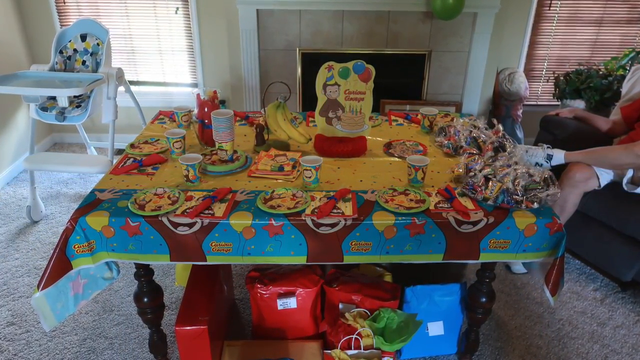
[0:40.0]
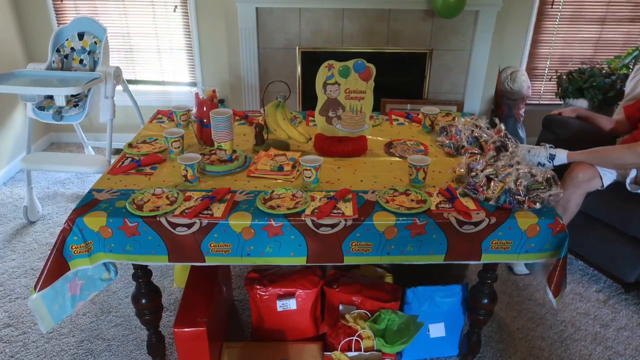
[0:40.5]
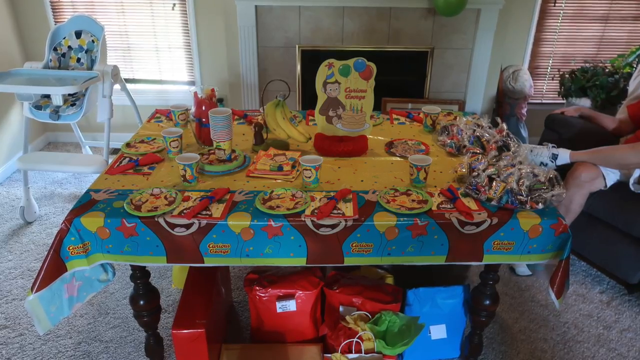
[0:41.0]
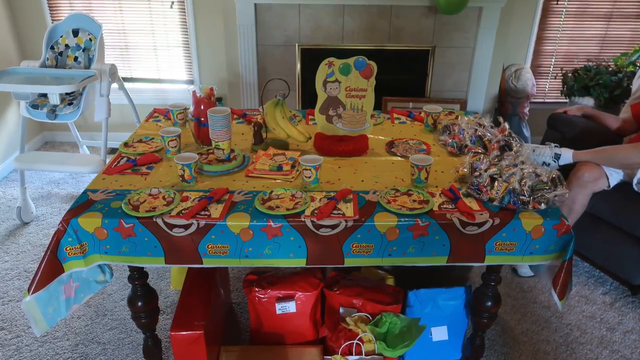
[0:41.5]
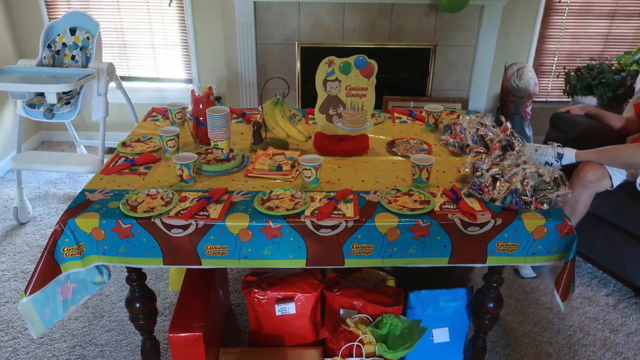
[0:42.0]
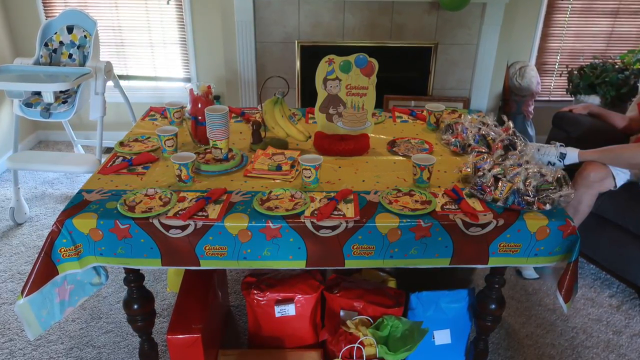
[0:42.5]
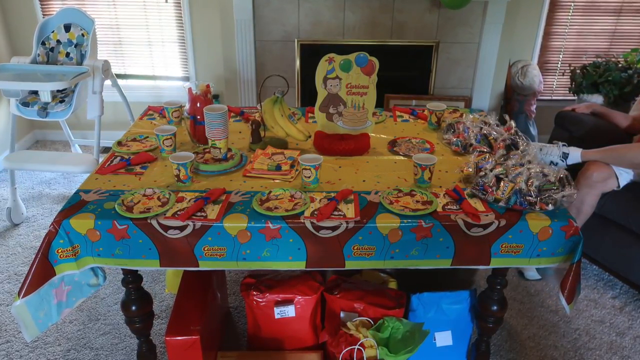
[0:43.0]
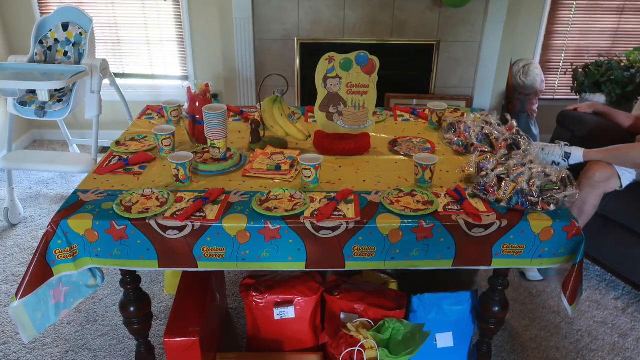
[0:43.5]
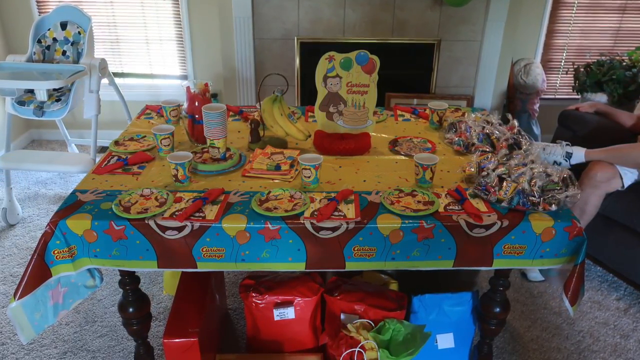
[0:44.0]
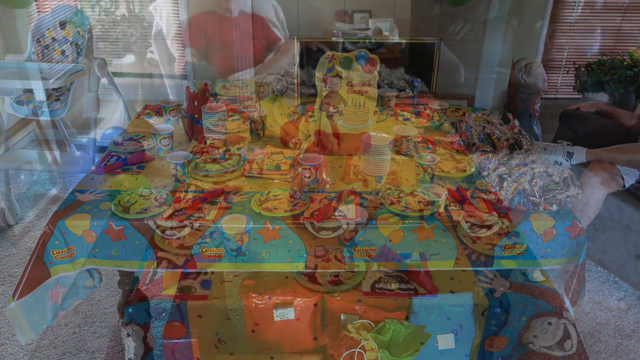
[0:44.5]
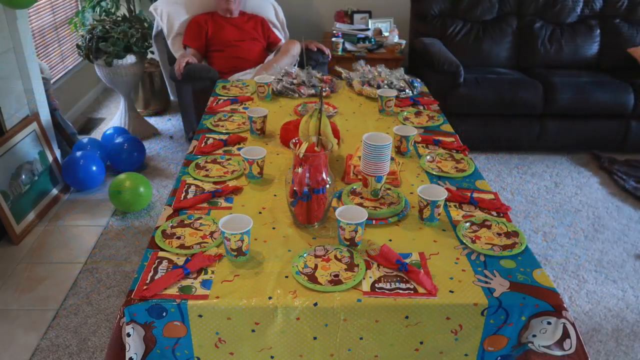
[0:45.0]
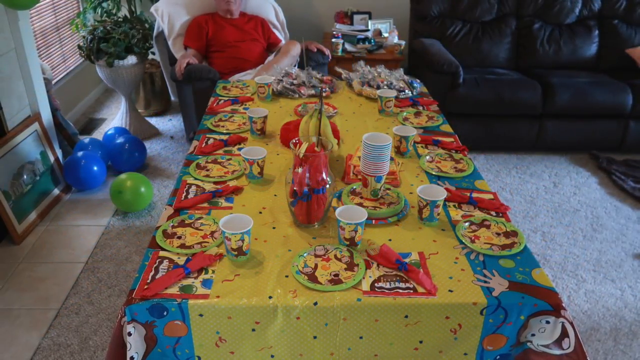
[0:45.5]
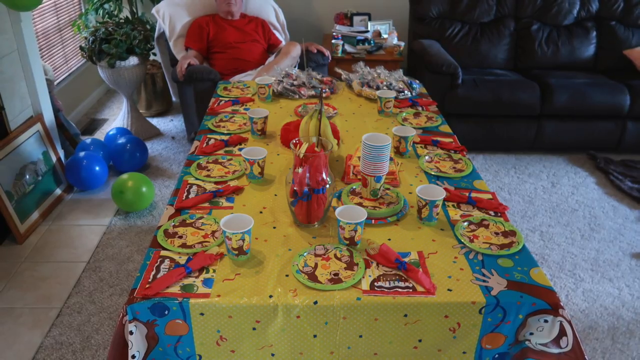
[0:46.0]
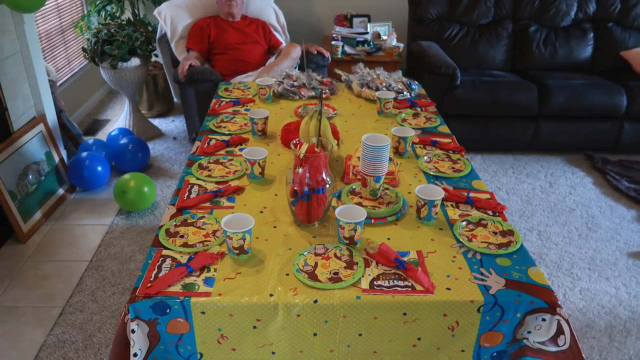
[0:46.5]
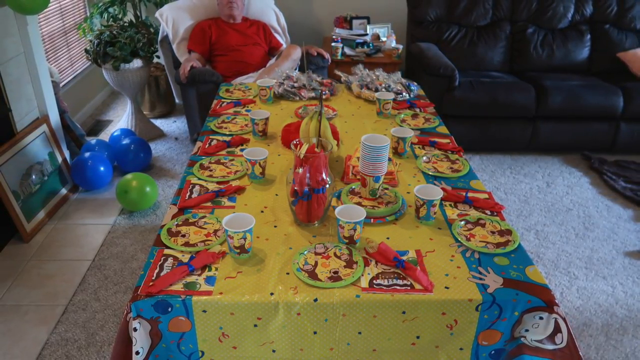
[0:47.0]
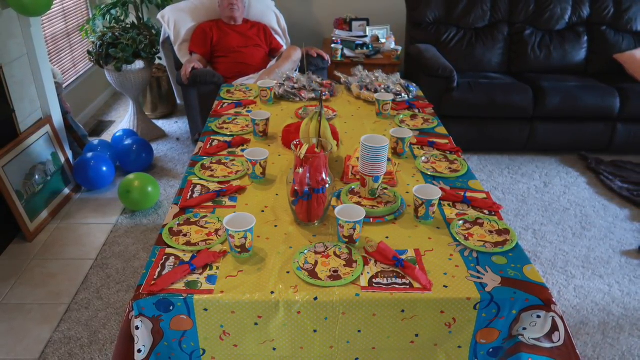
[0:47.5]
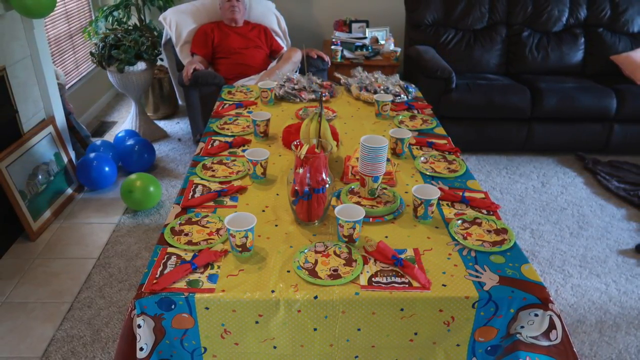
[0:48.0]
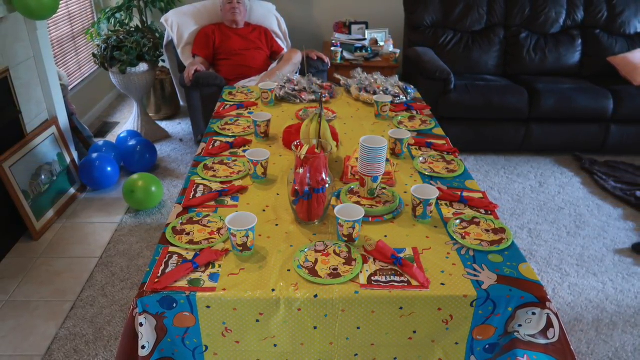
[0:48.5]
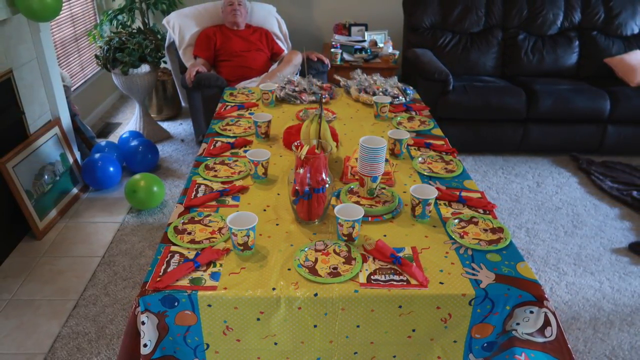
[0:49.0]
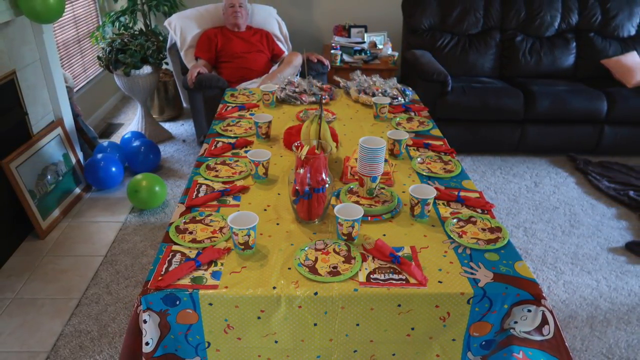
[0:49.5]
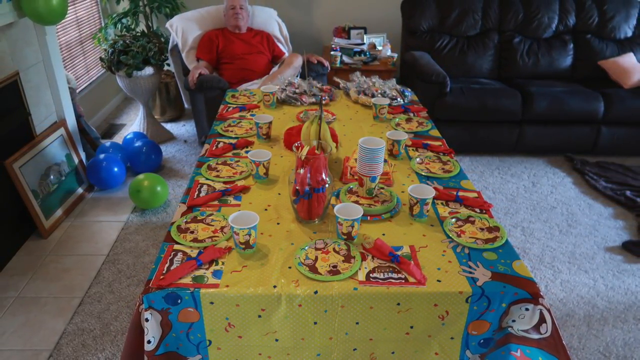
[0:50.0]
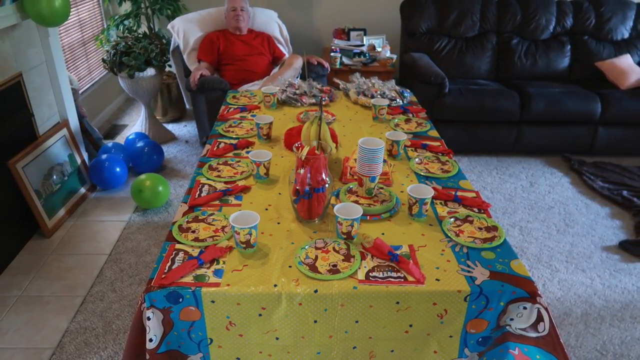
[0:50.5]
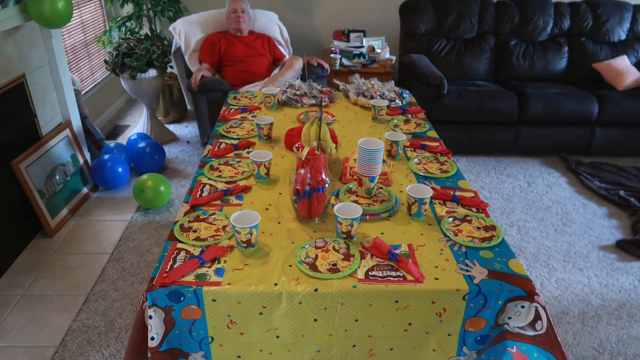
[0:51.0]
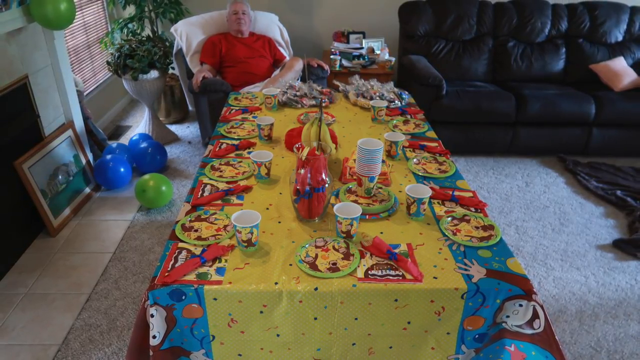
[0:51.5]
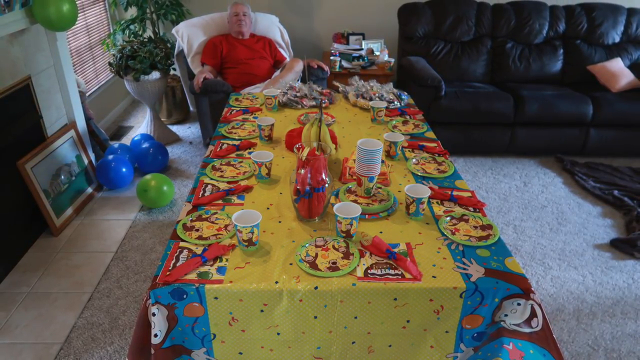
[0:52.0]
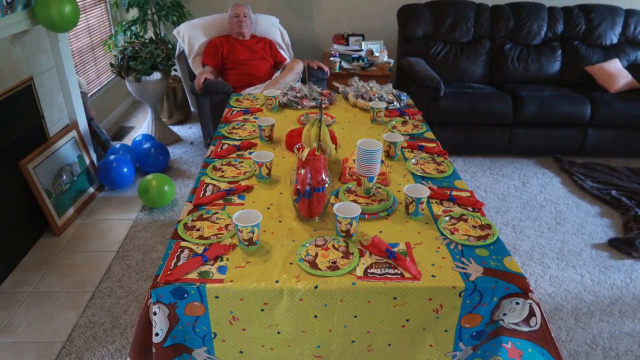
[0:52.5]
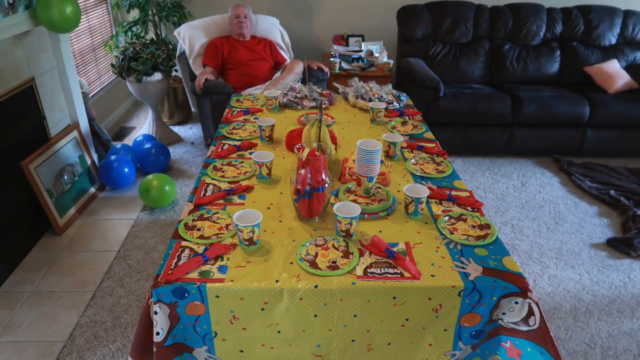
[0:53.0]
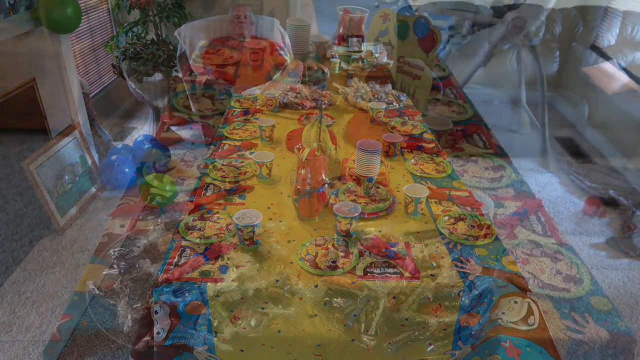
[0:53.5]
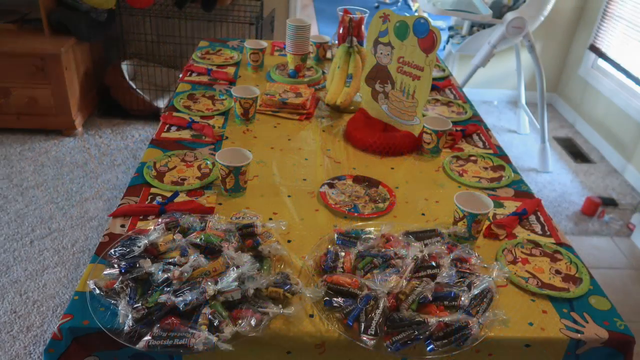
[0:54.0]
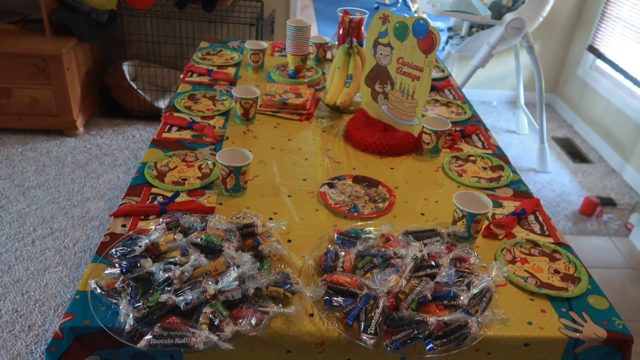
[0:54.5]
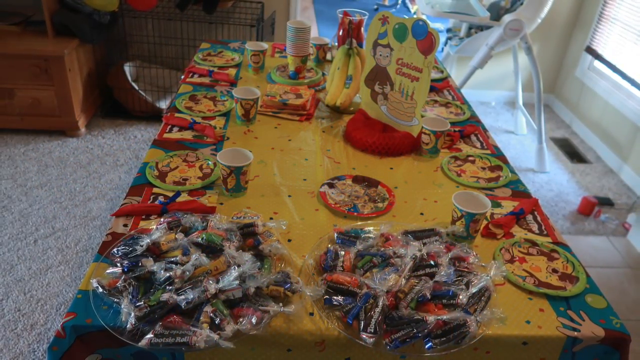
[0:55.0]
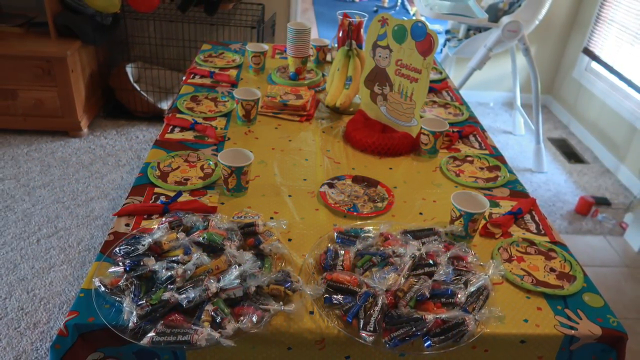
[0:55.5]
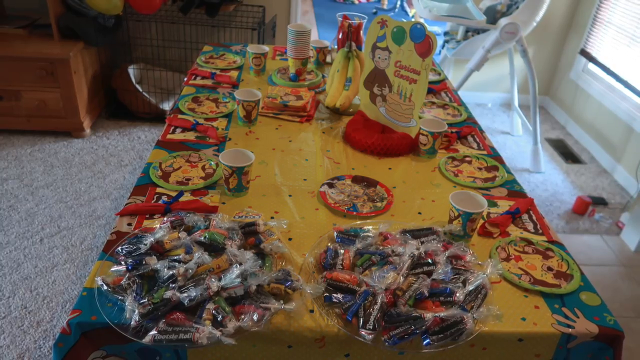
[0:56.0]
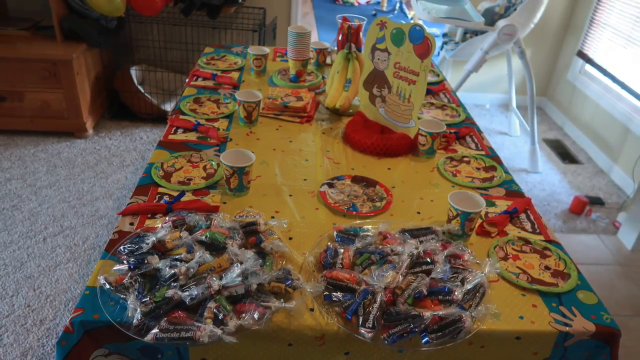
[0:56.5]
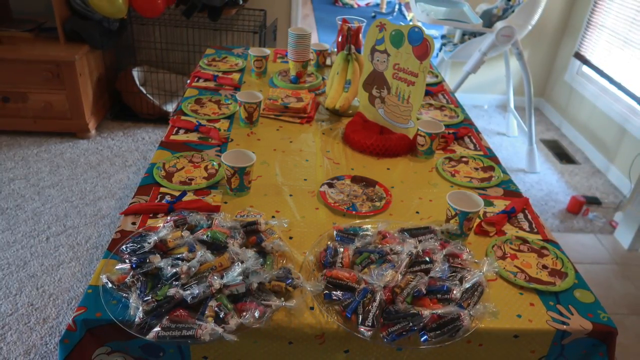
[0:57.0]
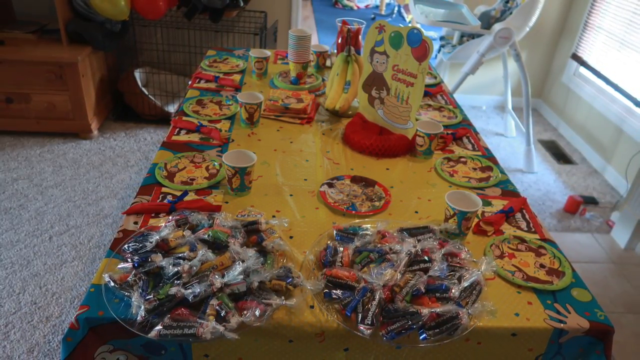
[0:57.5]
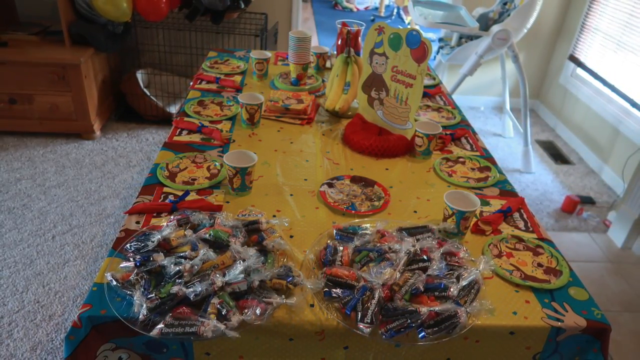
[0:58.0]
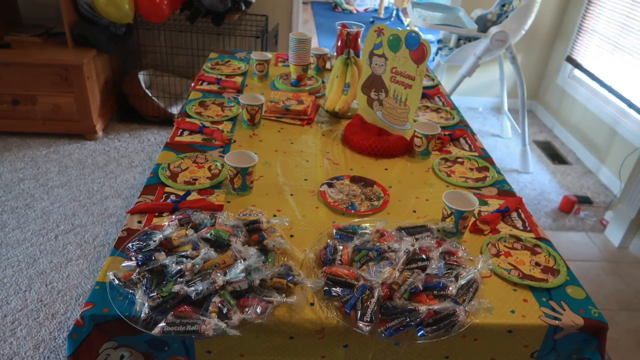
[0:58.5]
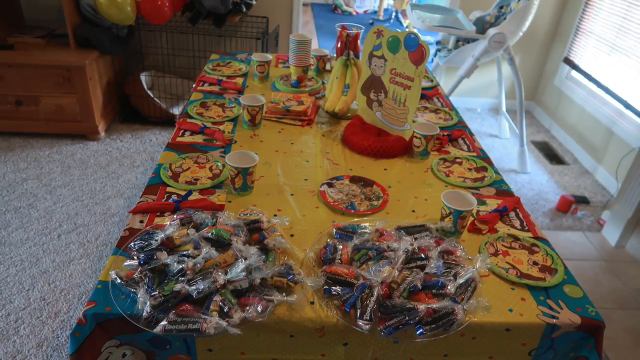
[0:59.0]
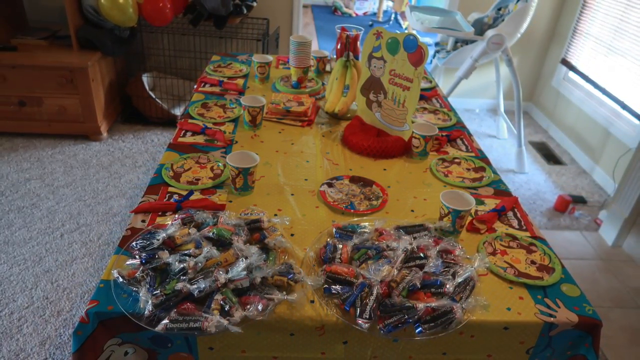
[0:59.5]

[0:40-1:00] The shot appears to show the table where the birthday party will take place. The table is set with Curious George themed cups and plates, along with Curious George napkins and a Curious George tablecloth, and the centerpiece is a picture of Curious George cutting a cake. A bunch of bananas is on the table as decoration, and the camera slowly zooms in on the table. Off to the left is probably the baby's high chair, and gifts for the baby are underneath the table. The next shot is an image of the full length of the table from the opposite end; as the image zooms out, a couple of people become visible. A man, apparently the baby's grandfather, is sitting in an armchair at the other side of the table. A black sofa is in the upper right corner, and some balloons are on the ground to the left of the fireplace, some blue and one green. Another shot shows the opposite side of the table, also completely Curious George themed, with what looks to be candy in some dishes.